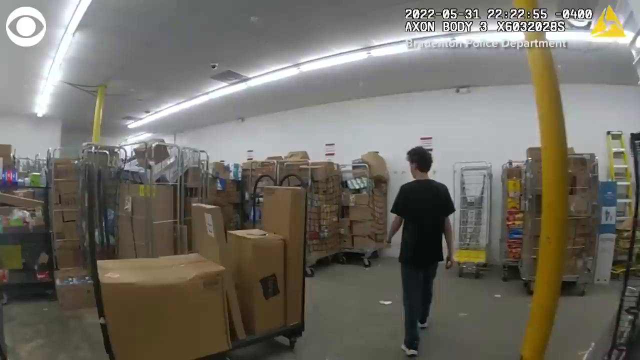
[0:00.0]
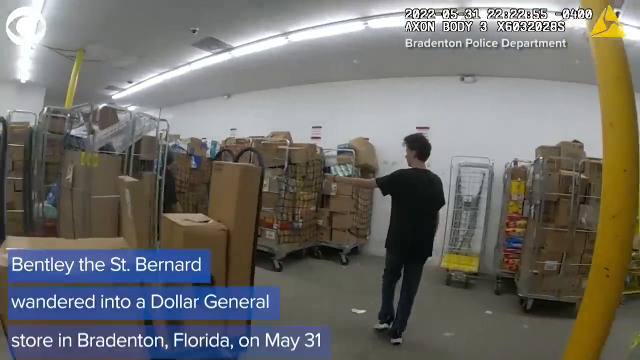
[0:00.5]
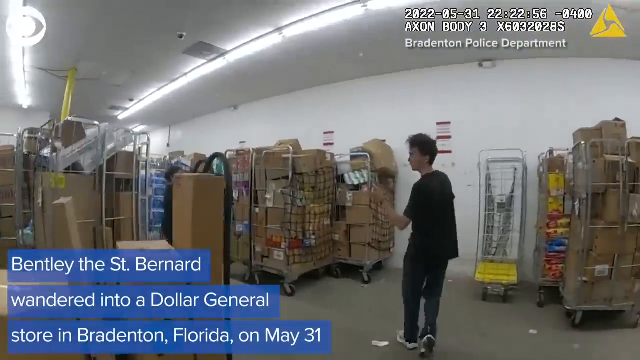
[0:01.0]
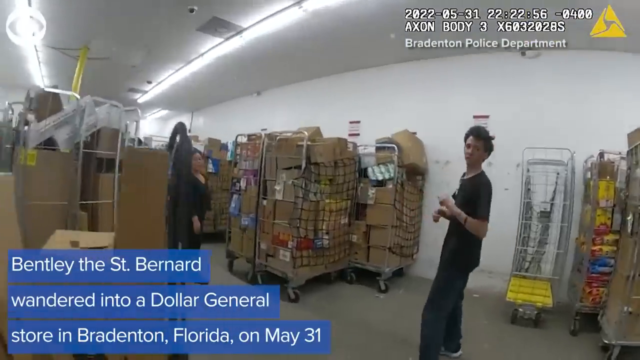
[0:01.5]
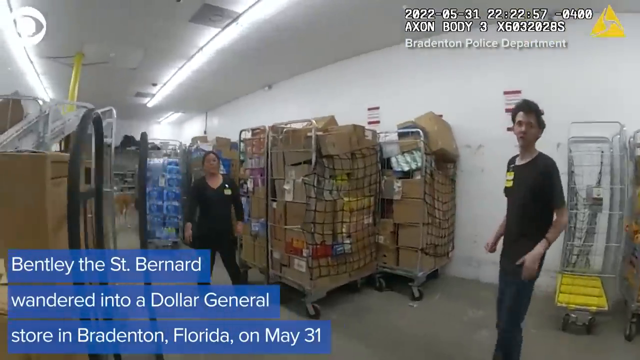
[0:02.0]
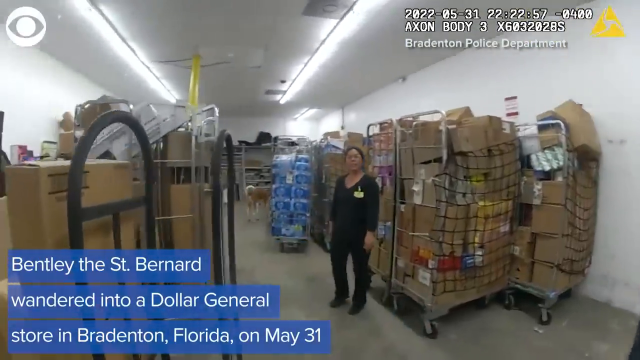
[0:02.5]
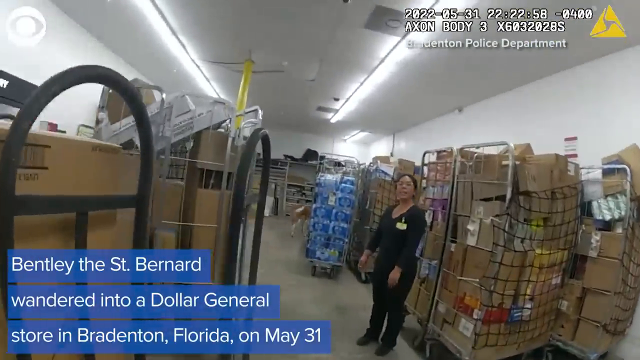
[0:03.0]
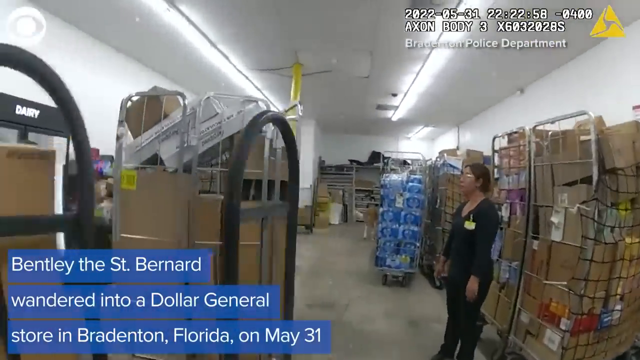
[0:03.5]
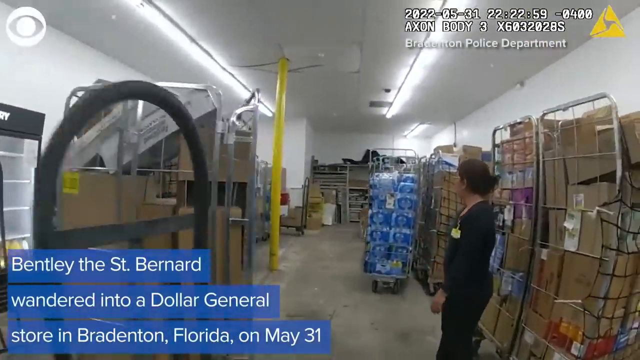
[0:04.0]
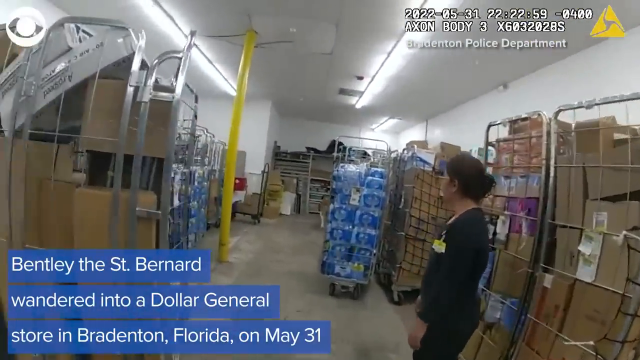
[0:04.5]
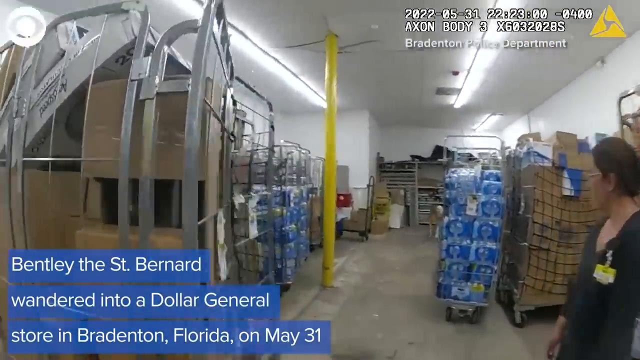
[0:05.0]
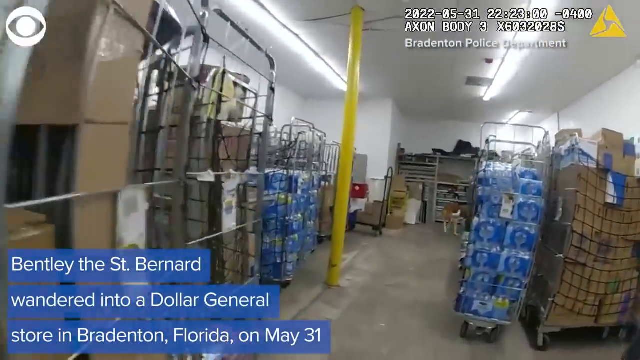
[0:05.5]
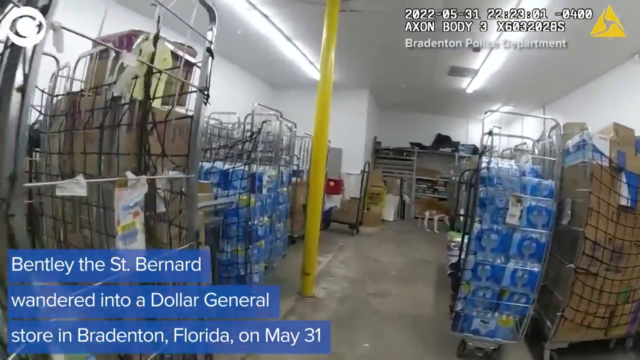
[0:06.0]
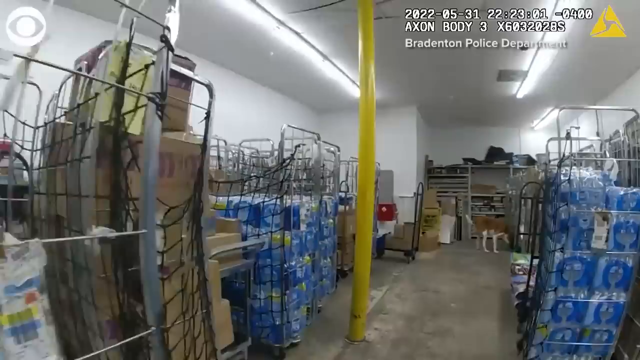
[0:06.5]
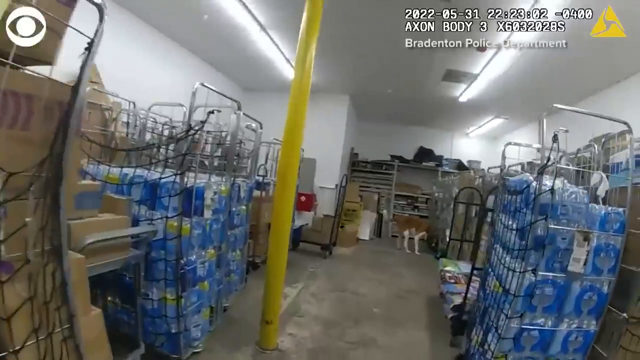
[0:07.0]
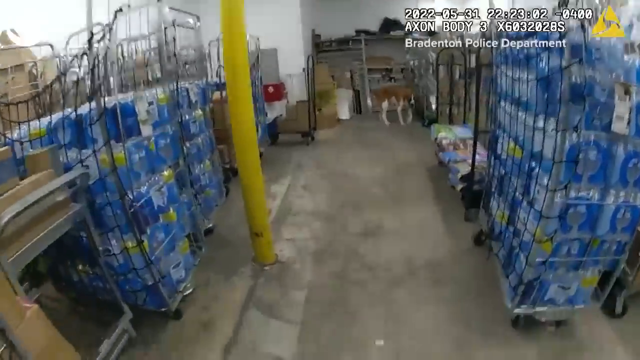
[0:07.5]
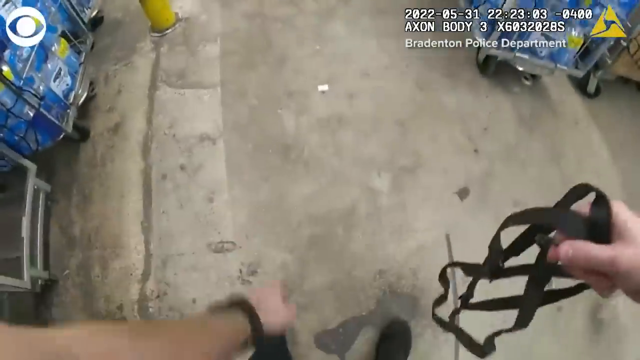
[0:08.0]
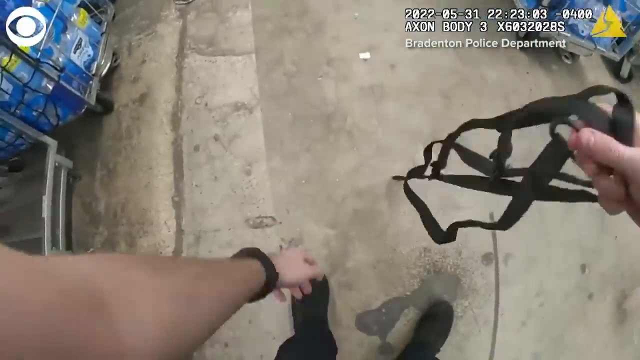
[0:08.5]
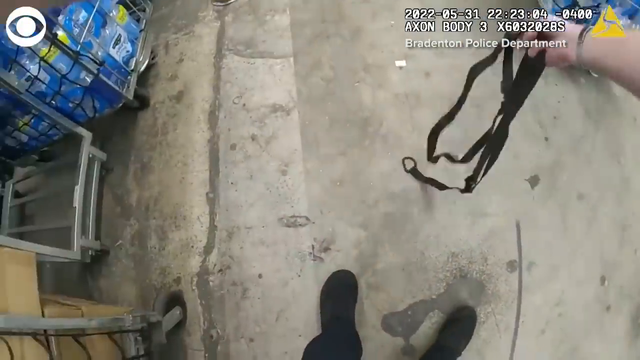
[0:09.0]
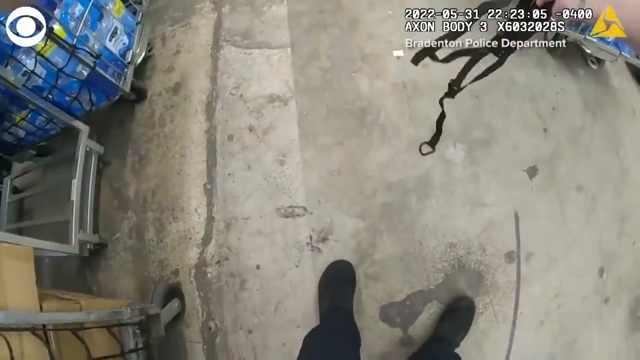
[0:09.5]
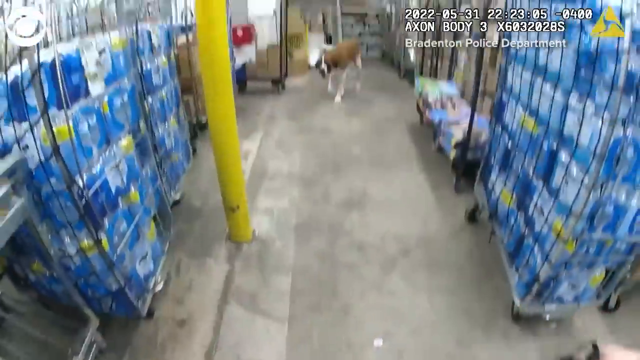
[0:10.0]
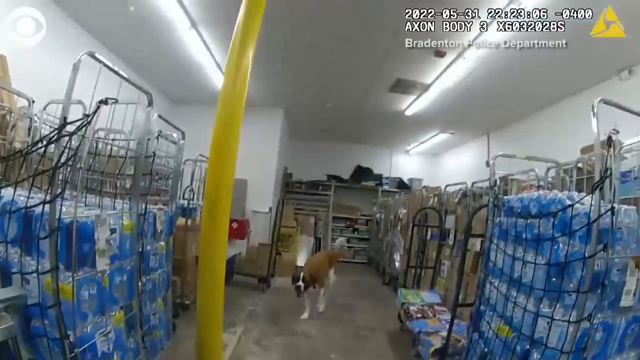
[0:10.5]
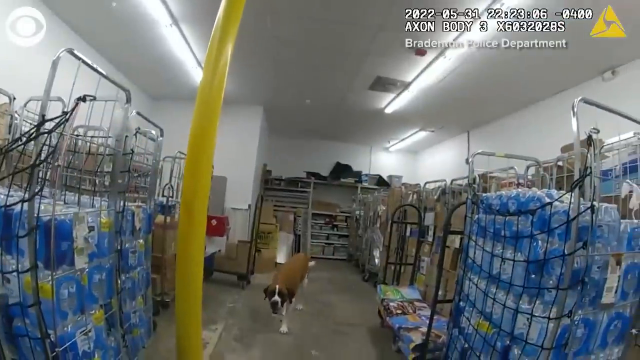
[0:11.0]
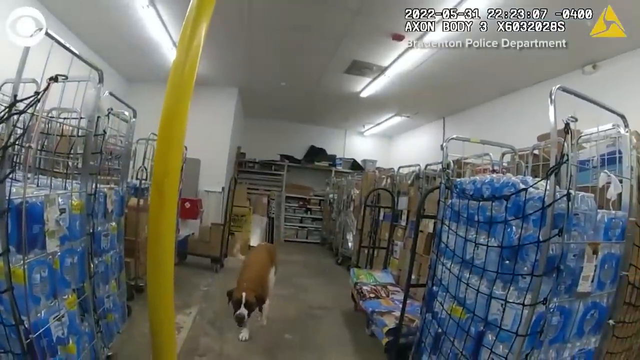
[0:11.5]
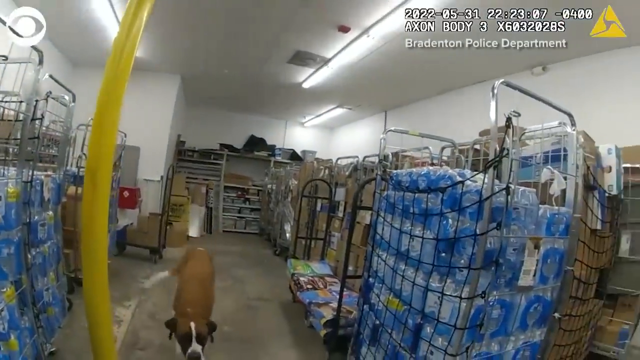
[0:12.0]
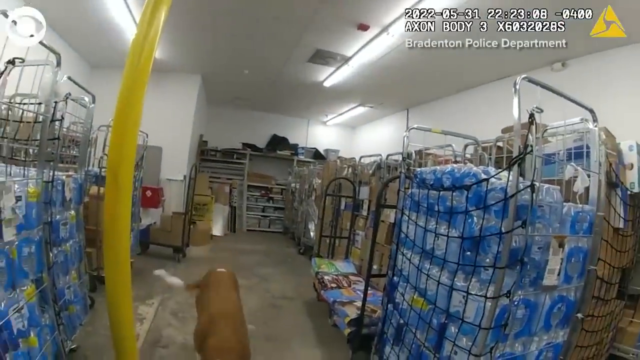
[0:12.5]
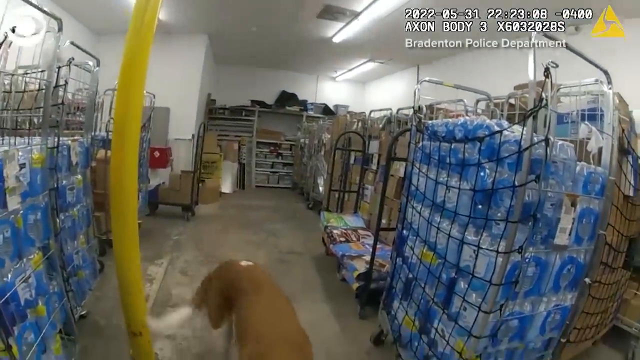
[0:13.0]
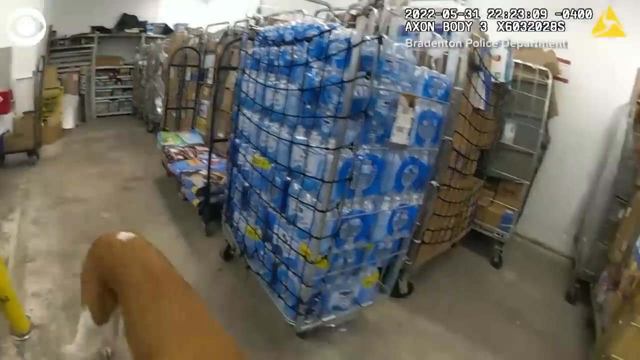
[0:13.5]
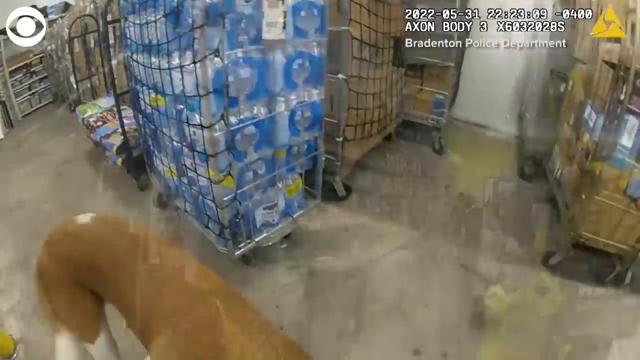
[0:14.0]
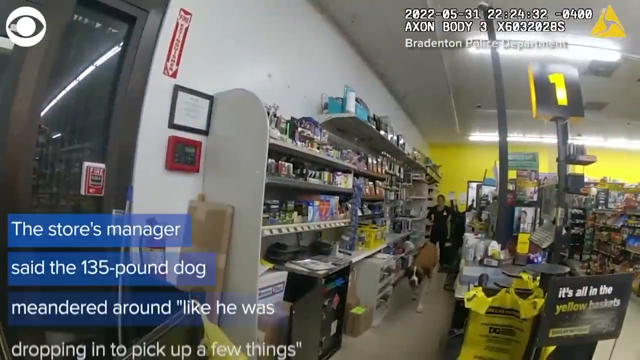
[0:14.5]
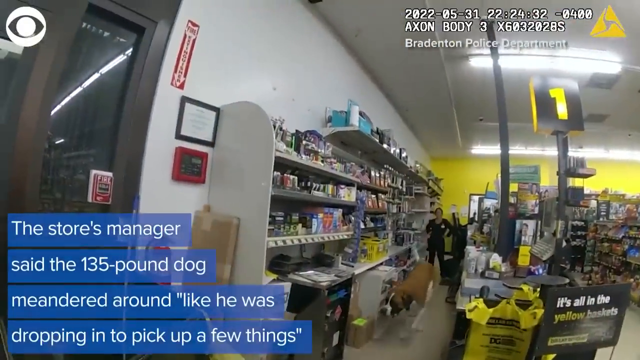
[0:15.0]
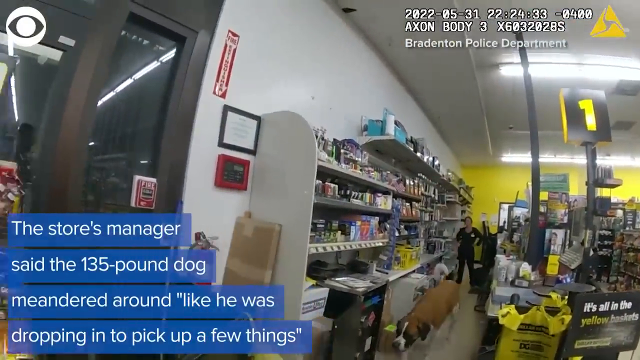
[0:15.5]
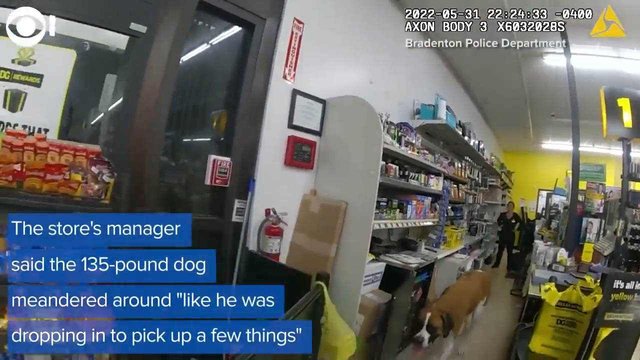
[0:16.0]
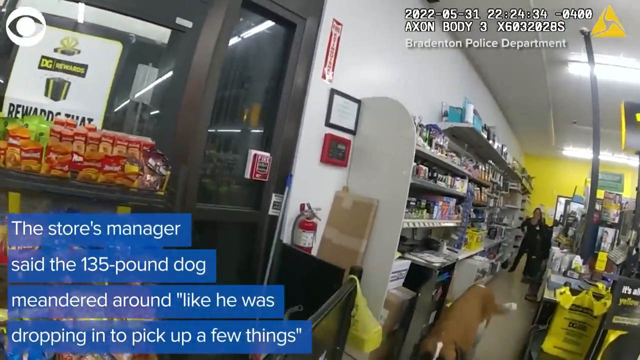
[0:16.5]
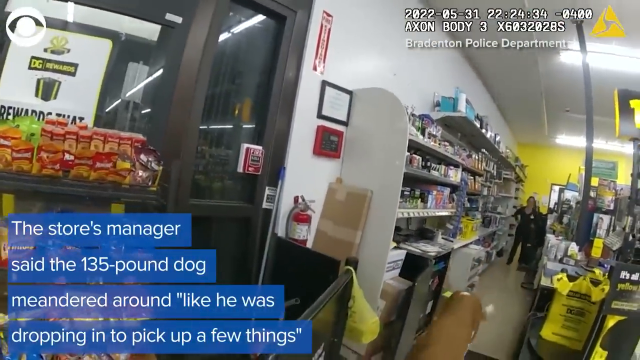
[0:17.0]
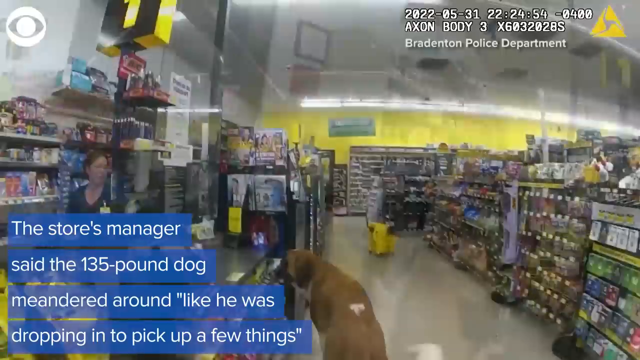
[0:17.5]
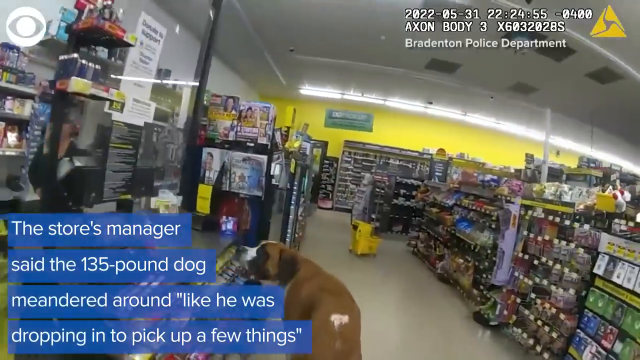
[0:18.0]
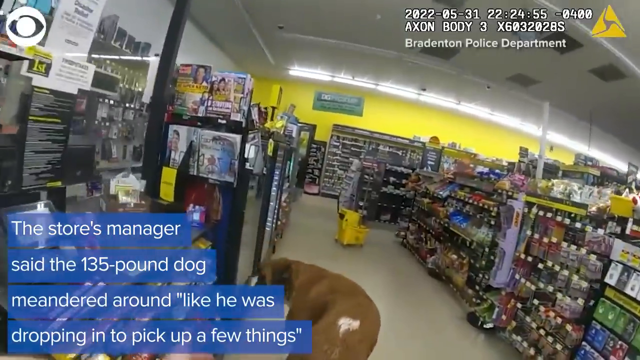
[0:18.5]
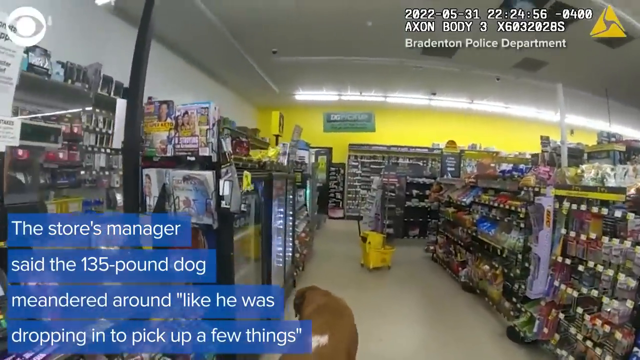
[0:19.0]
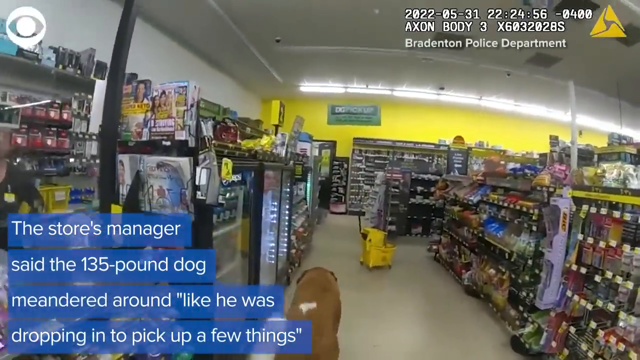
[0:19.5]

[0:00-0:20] The footage appears to come from a body cam, showing a warehouse filled with many cardboard boxes and stacks of water. A man walks through the warehouse, and after he walks in, a woman appears. A date and time stamp in the top right corner reads May 31st, 2022, and below it the footage is identified as coming from the Bradenton Police Department in Florida. The CBS eye logo is in the top left corner. Text in the bottom left corner reads "Bentley St. Bernard wandered into a dollar general." The place looks like a store. From the view of the police officer wearing the body cam, a dog, apparently the St. Bernard, walks in the back of the warehouse of the Family Dollar and then through the store. The officer has a leash and is about to get the St. Bernard with it.